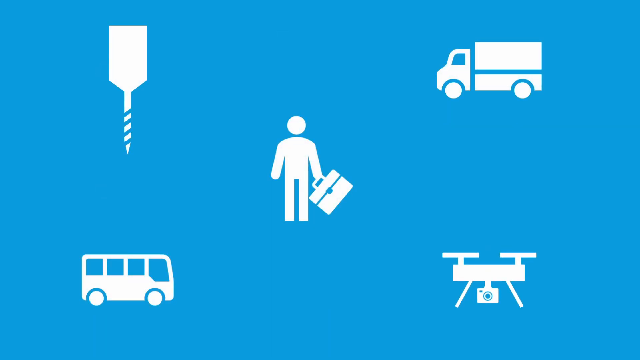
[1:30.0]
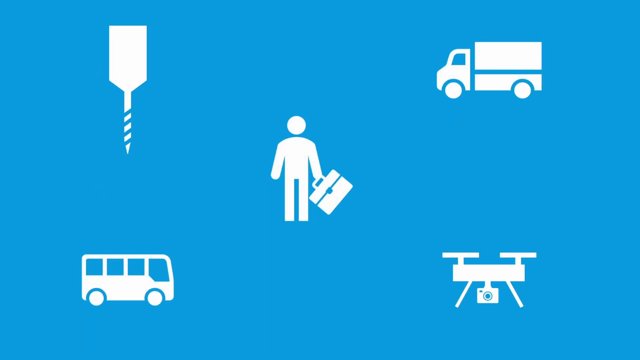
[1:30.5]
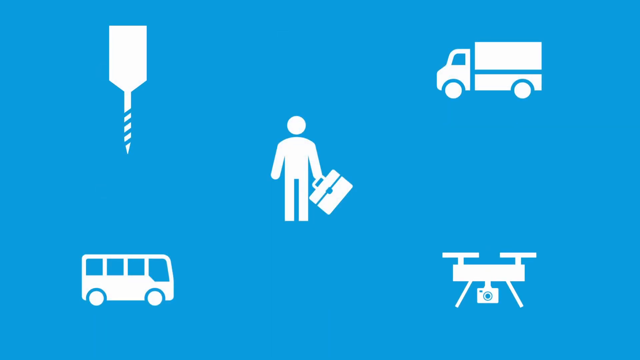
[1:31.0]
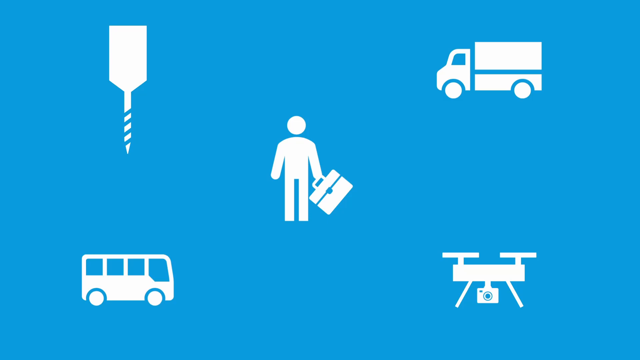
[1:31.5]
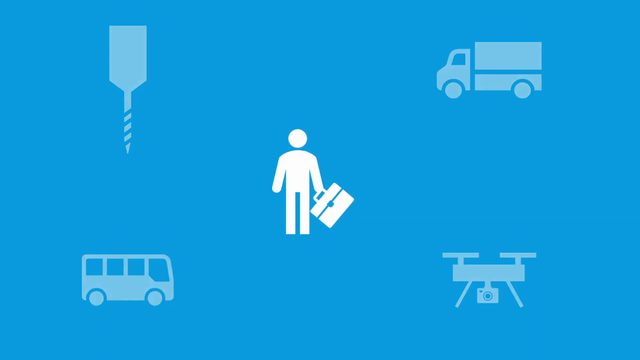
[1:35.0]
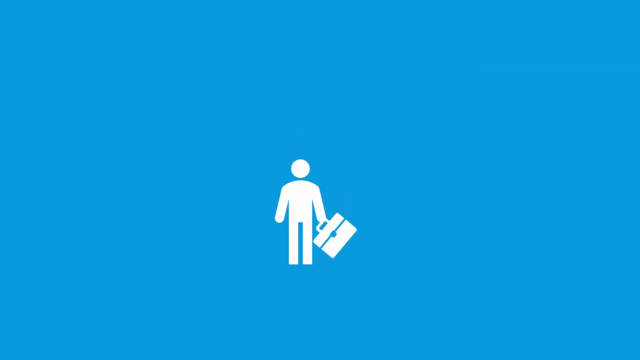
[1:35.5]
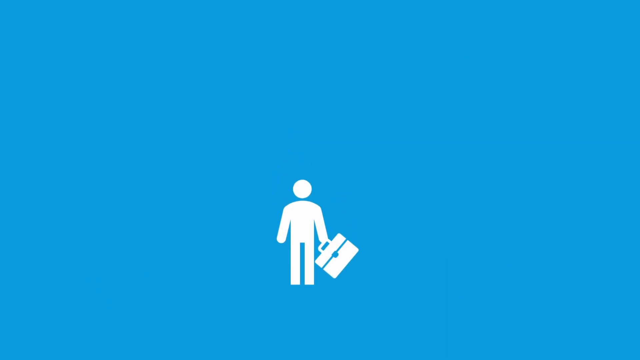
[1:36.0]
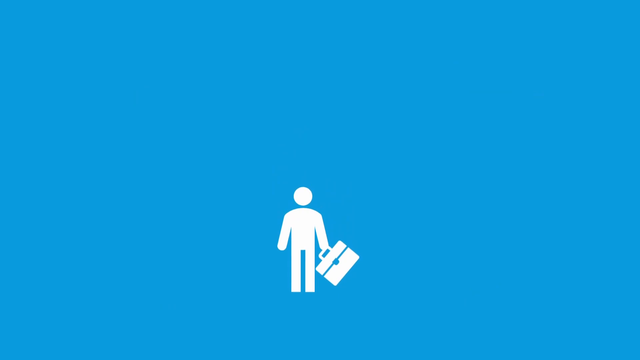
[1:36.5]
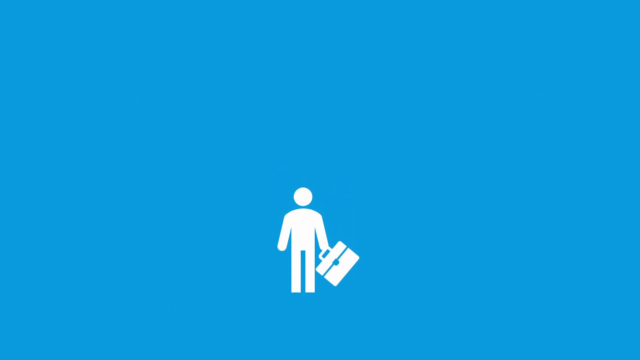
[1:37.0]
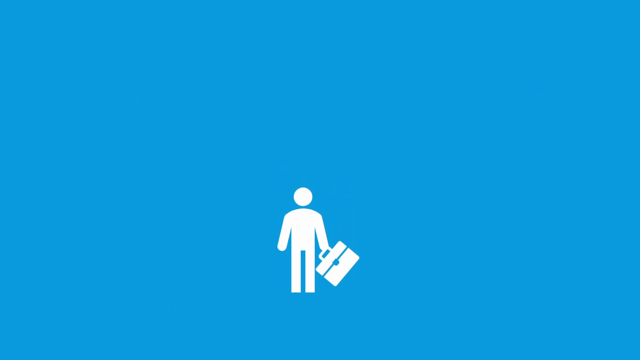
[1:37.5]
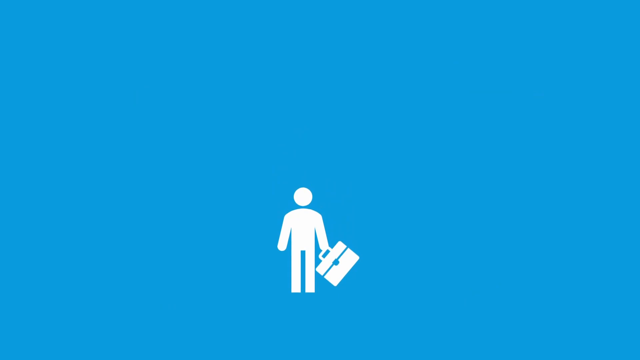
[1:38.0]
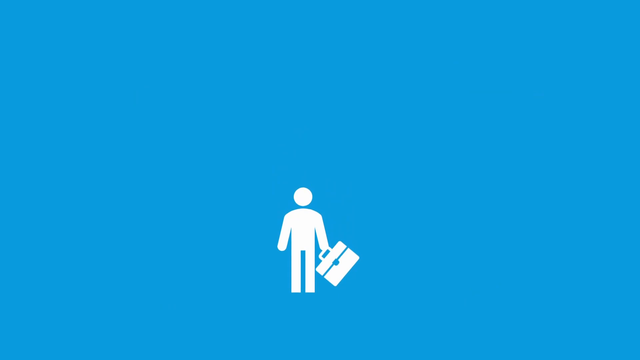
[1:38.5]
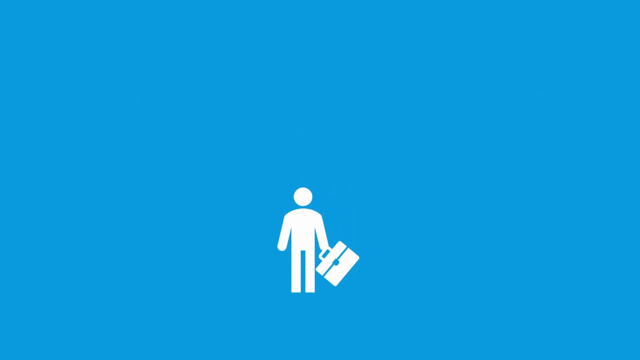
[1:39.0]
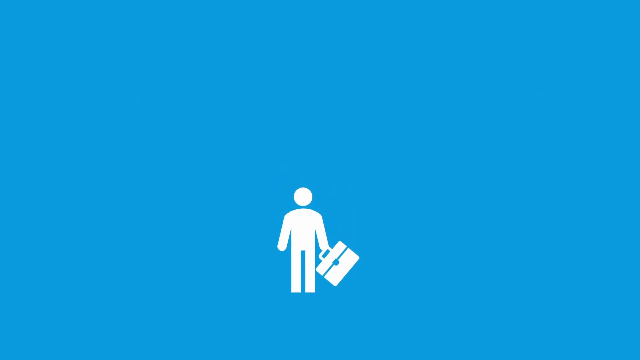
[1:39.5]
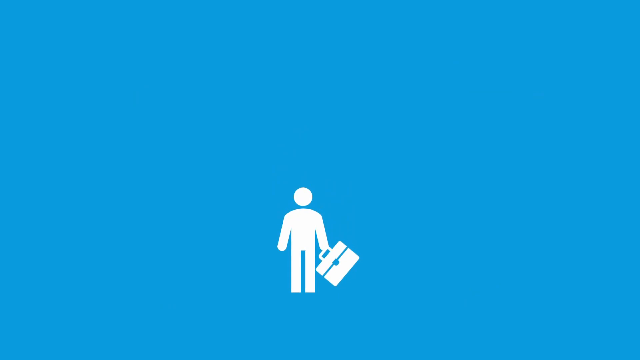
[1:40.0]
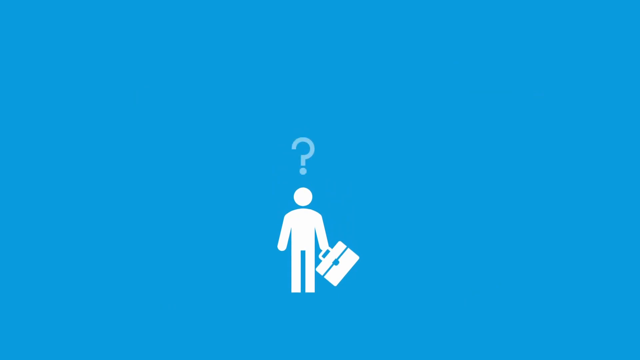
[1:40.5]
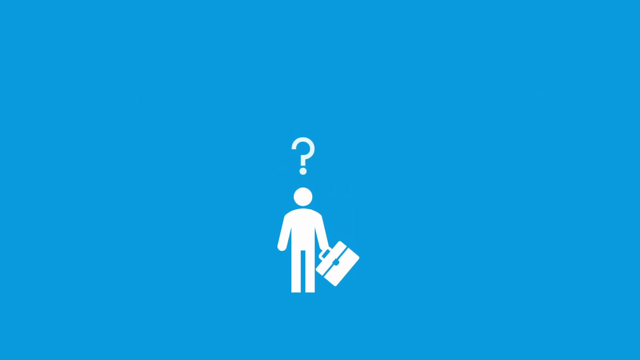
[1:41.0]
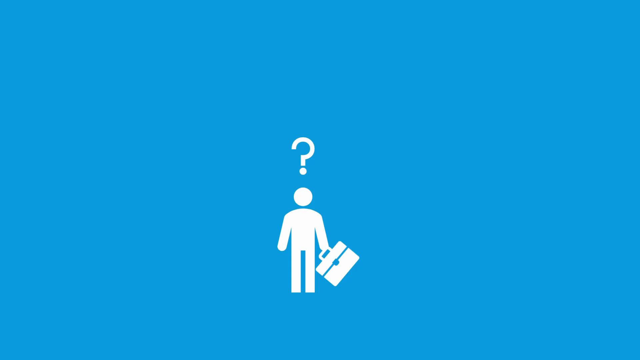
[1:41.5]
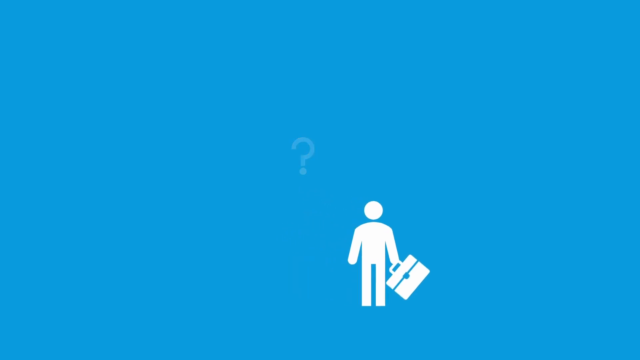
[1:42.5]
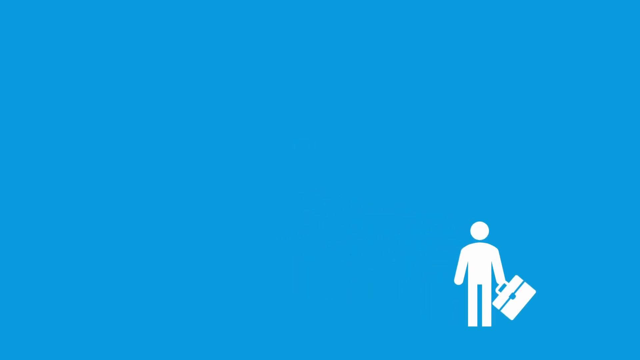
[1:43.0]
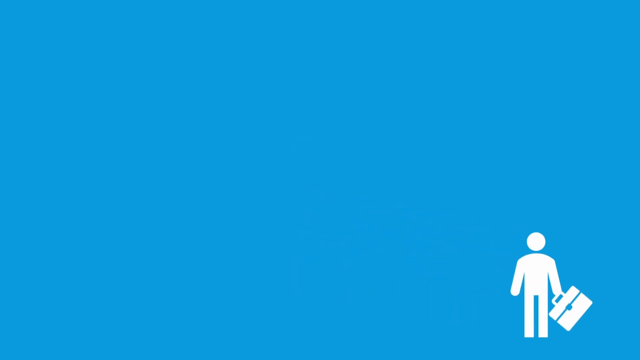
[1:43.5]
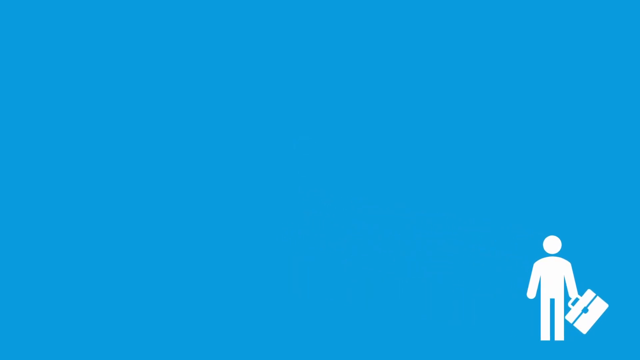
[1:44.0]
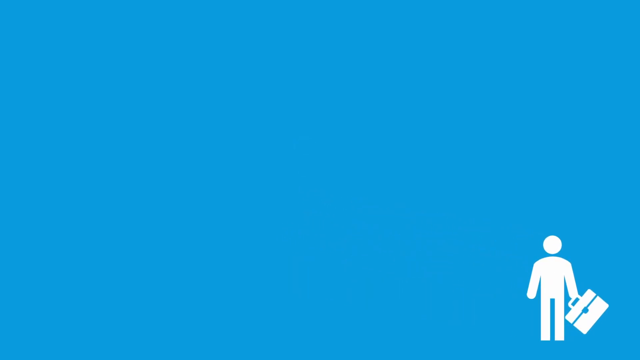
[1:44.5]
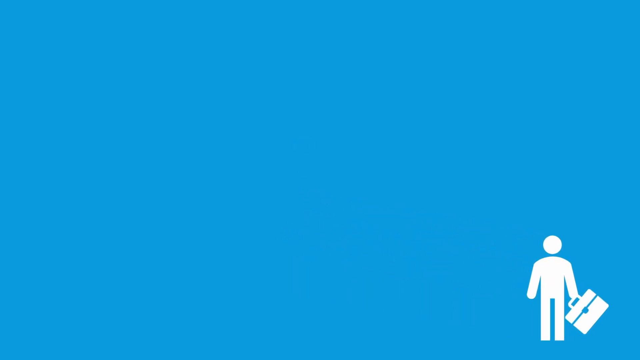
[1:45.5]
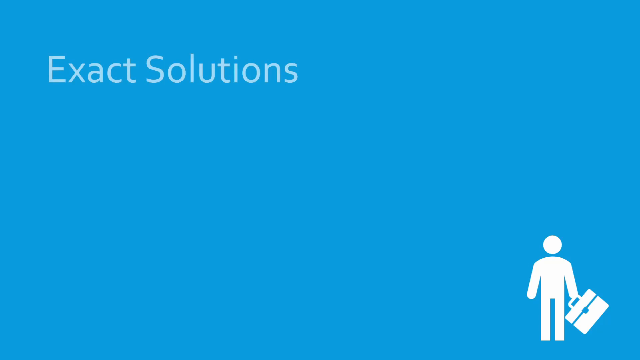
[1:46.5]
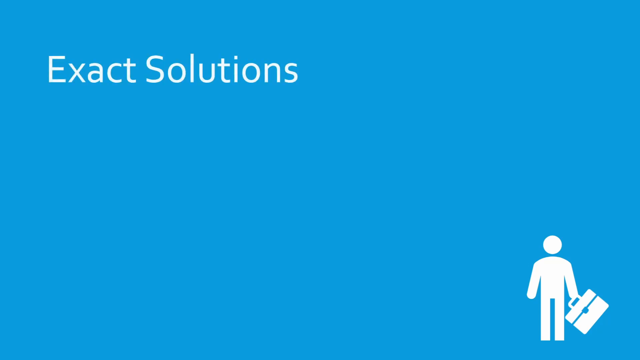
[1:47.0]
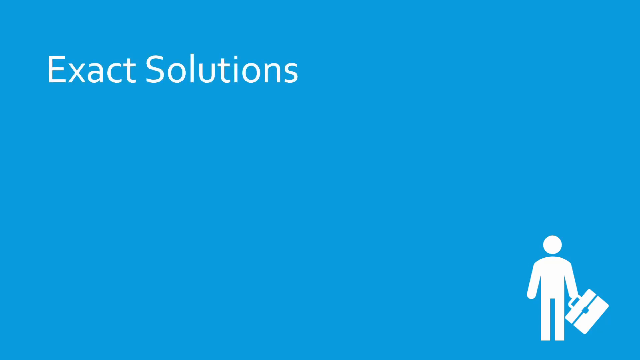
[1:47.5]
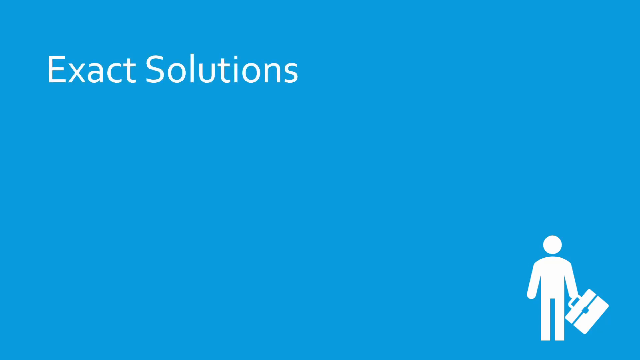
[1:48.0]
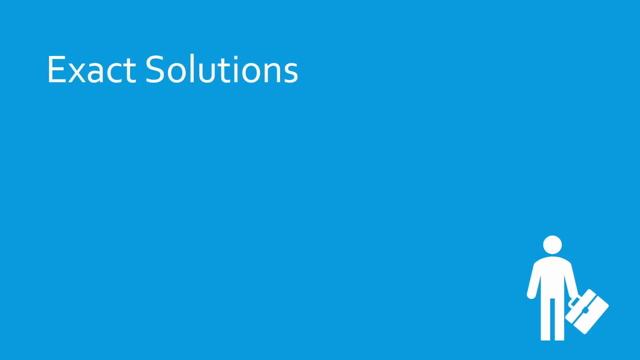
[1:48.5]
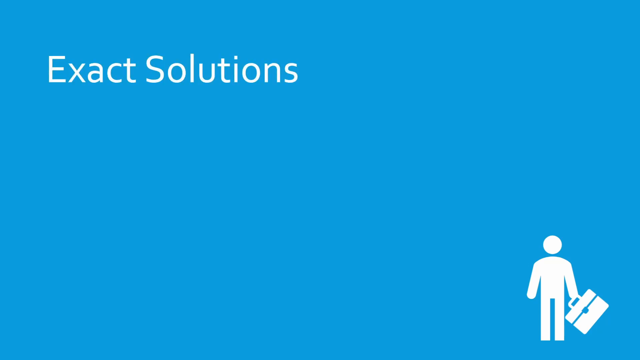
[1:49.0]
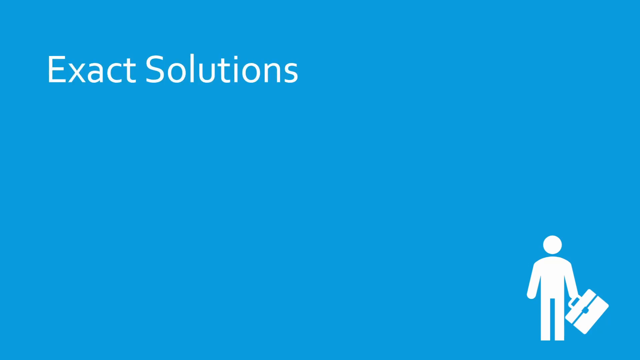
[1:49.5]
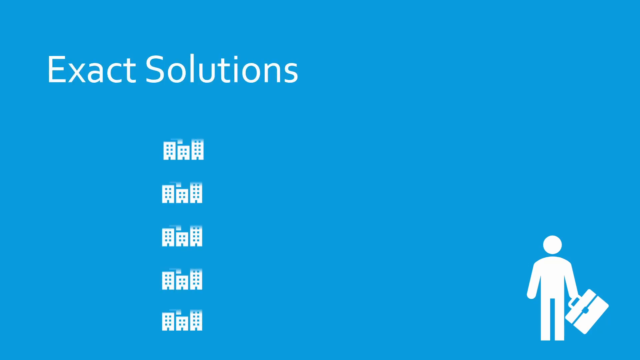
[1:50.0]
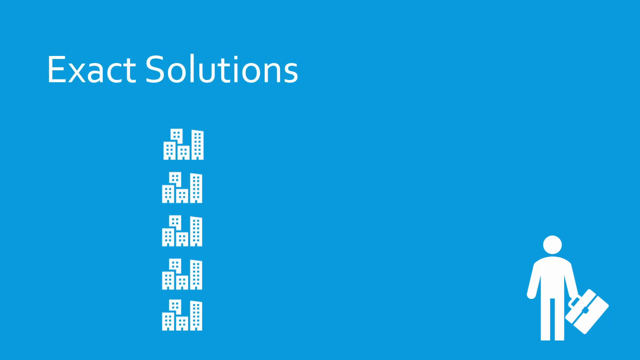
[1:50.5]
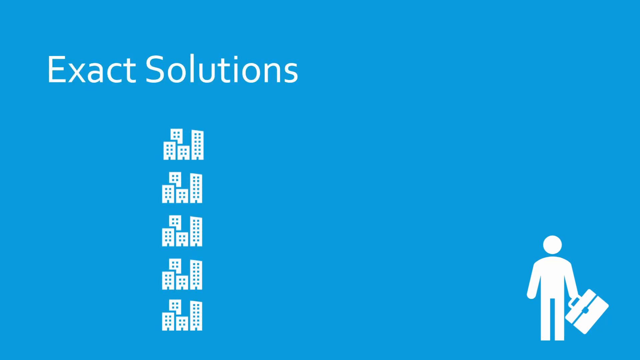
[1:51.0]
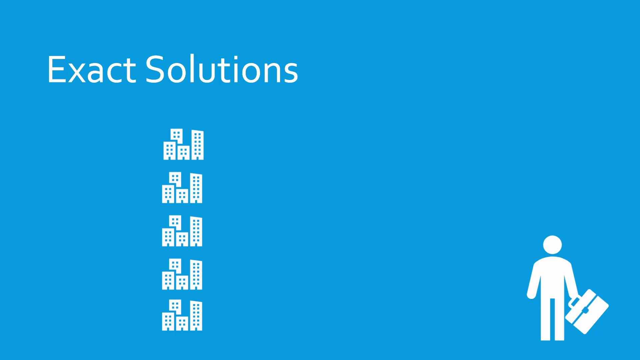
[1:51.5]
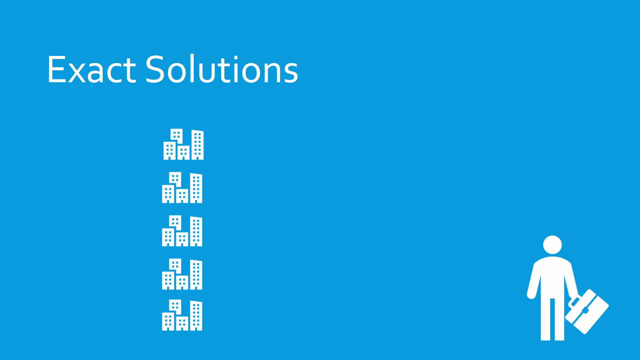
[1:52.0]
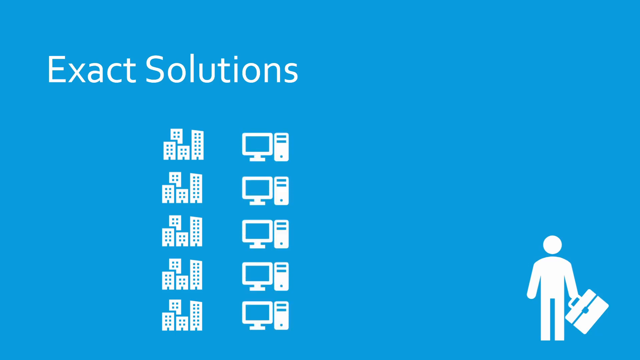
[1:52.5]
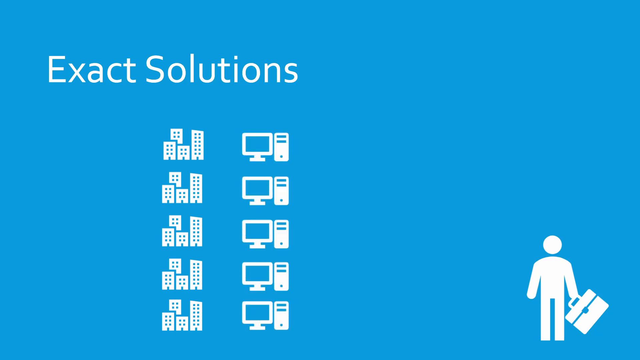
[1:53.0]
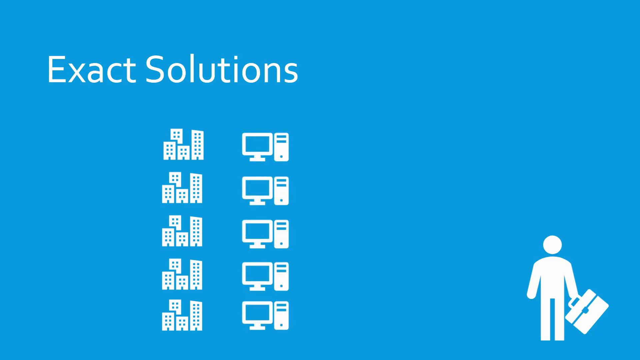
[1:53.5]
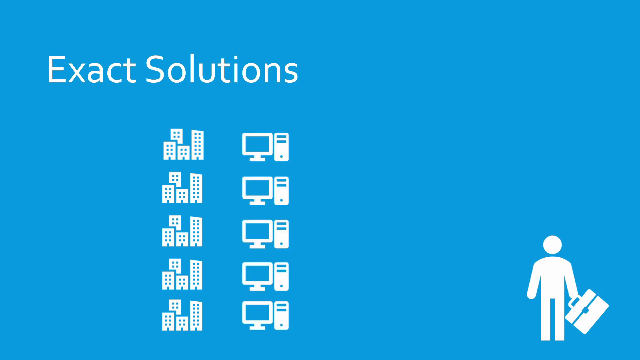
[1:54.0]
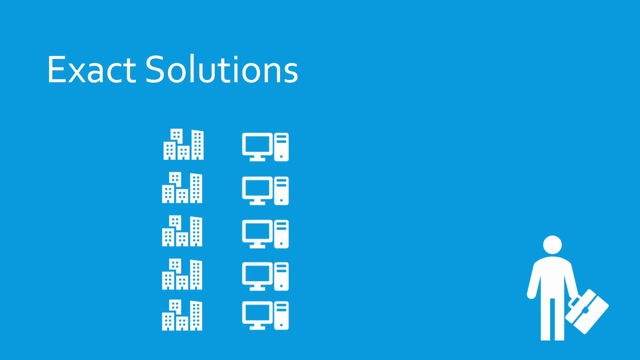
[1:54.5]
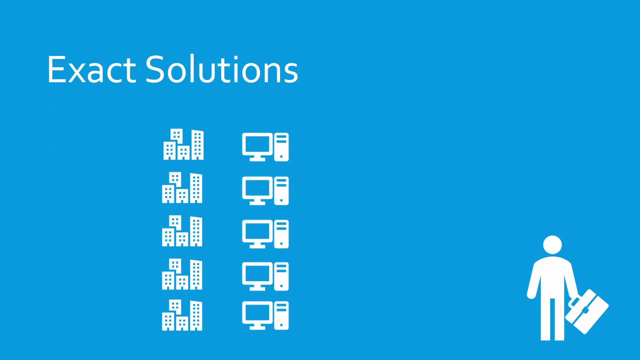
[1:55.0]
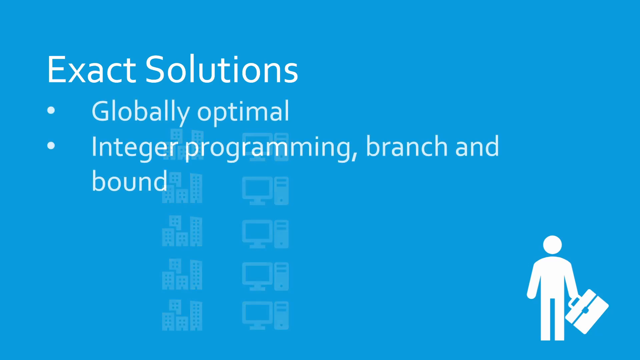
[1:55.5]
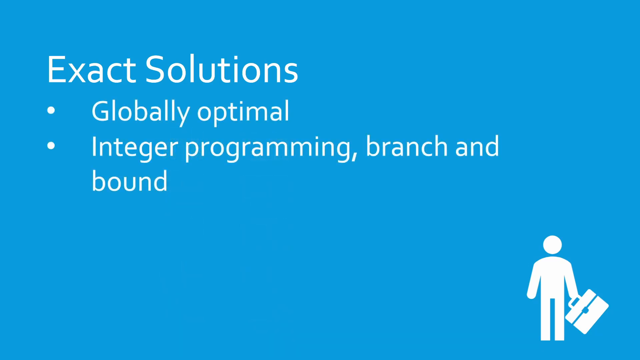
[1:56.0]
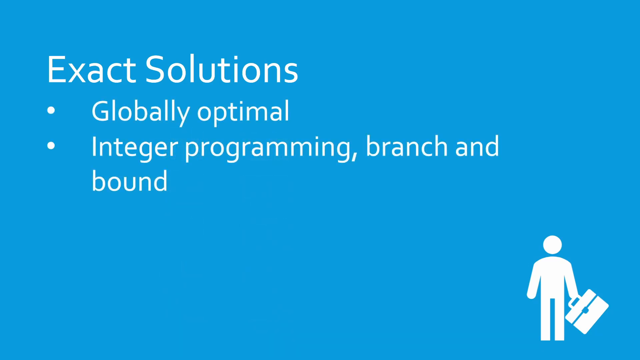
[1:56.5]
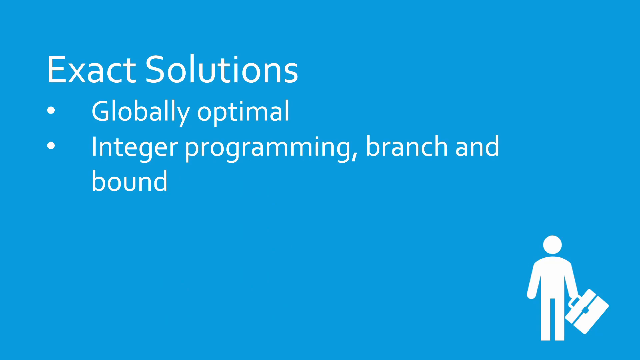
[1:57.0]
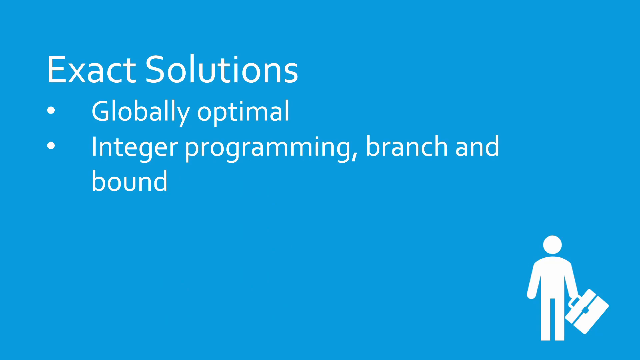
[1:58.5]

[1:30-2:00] The video is titled "What is the Traveling Salesman Problem?" Every slide background is blue and all the graphics are white. A bunch of houses turn into dots, and then it almost looks like satellites are going around. The screen then shows what looks like a screwdriver on the left-hand side, the traveling salesman in the middle, a truck on the right-hand diagonal side, what is apparently a satellite at the bottom right, and a school bus at the bottom left. All of the icons then disappear except the traveling salesman, who moves down to the bottom; a question mark appears over his head, and he moves off to the bottom right. "exact solutions" appears in the left corner. Five cities pop up, followed by five computer monitors, or maybe TVs with remotes. The text reads "exact solutions, globally optimal, integer programming, branch, and bound."